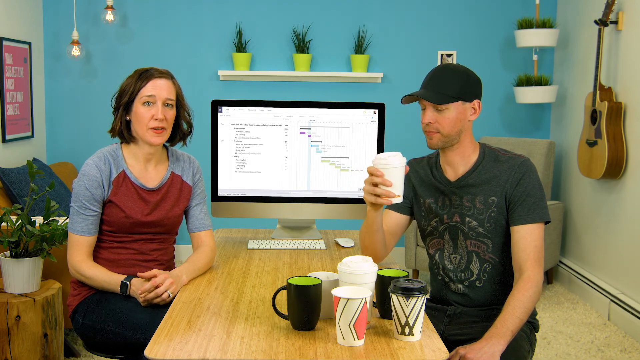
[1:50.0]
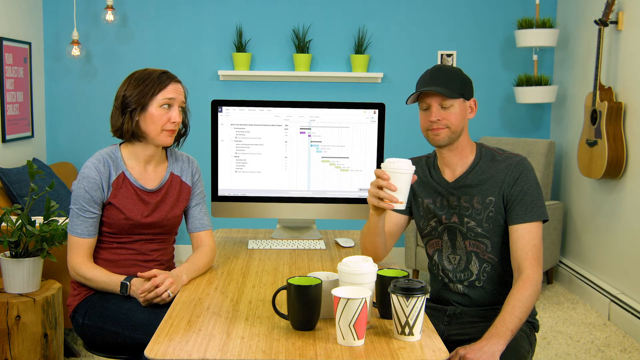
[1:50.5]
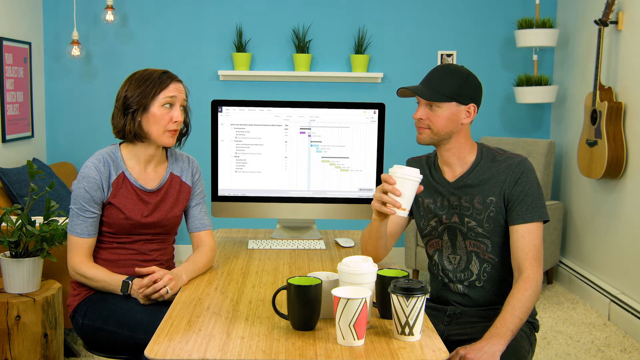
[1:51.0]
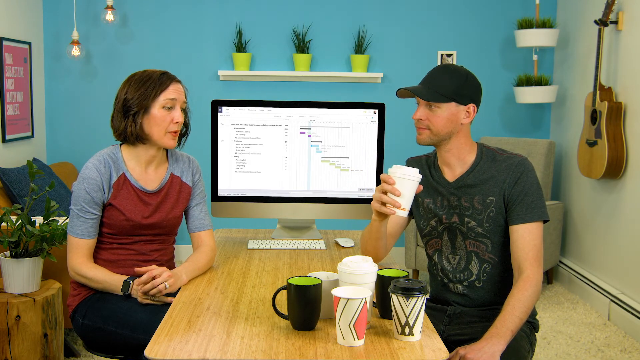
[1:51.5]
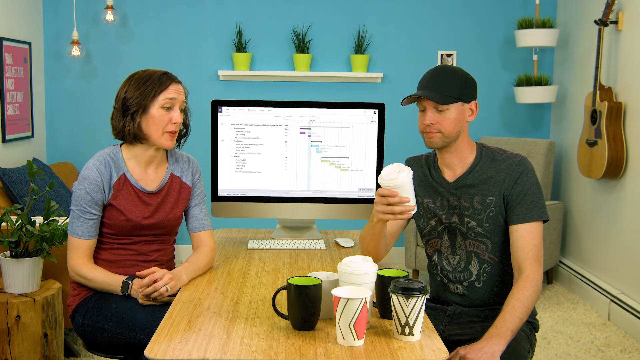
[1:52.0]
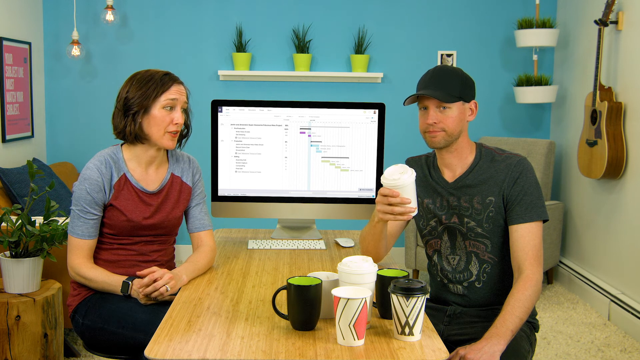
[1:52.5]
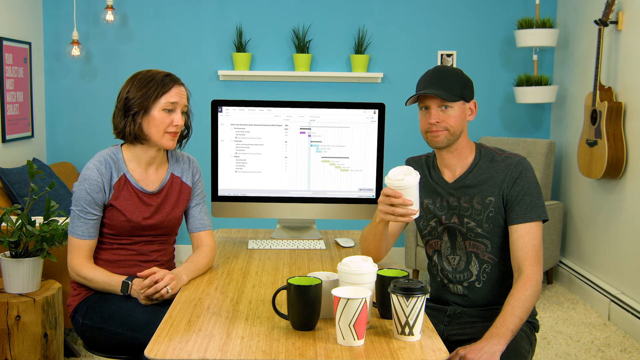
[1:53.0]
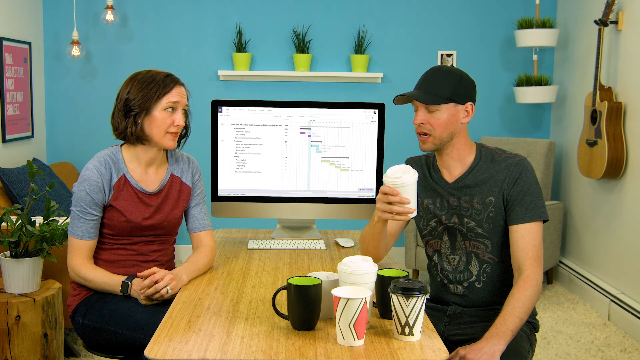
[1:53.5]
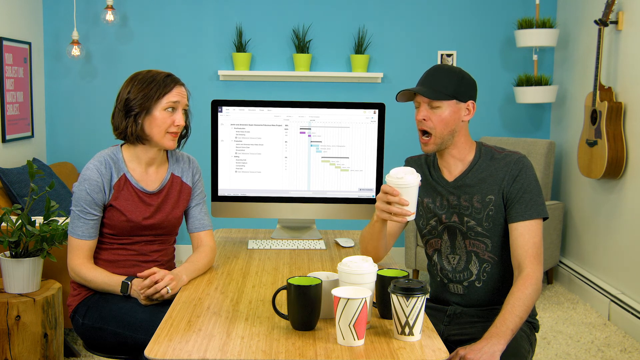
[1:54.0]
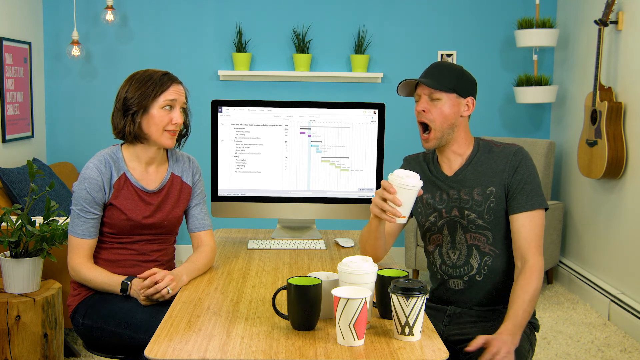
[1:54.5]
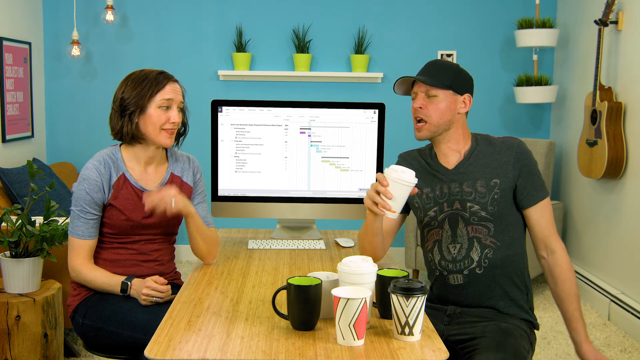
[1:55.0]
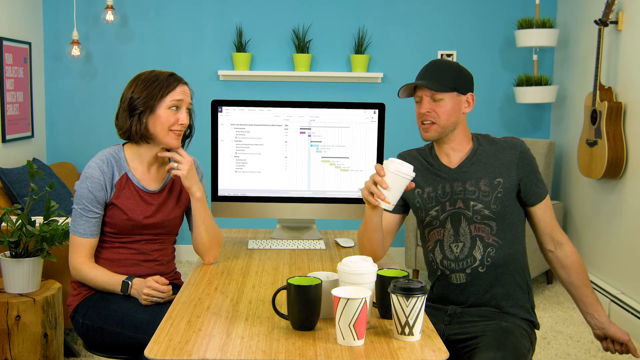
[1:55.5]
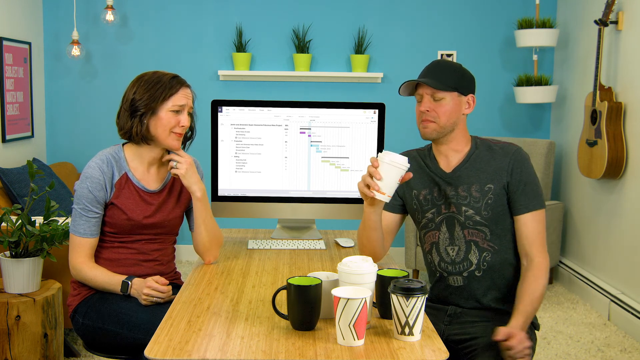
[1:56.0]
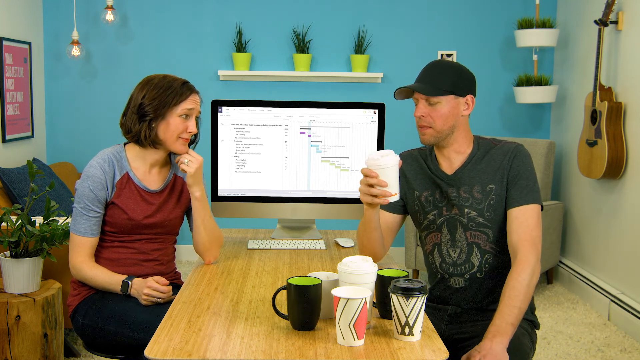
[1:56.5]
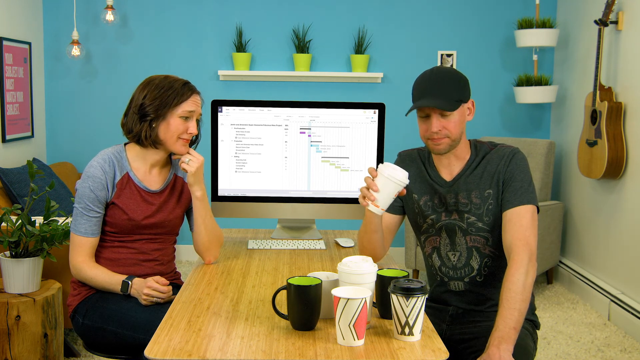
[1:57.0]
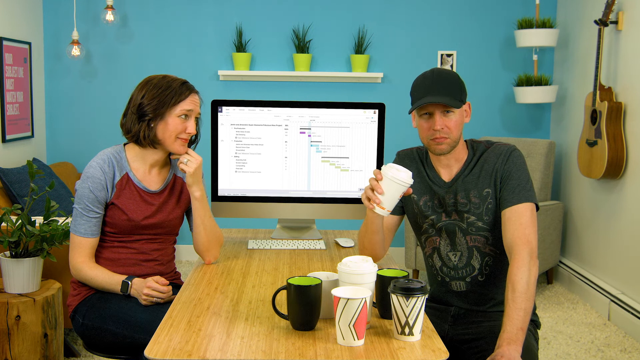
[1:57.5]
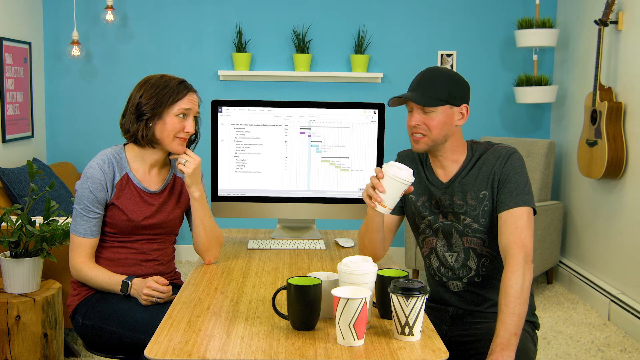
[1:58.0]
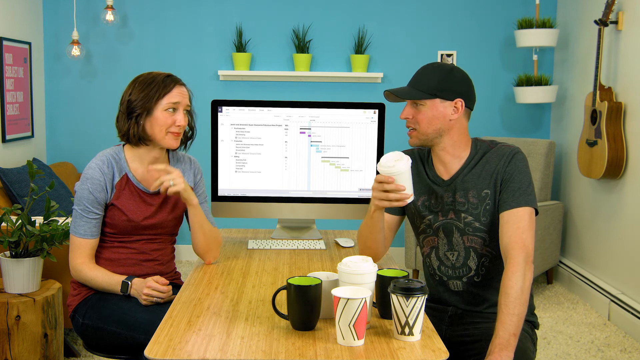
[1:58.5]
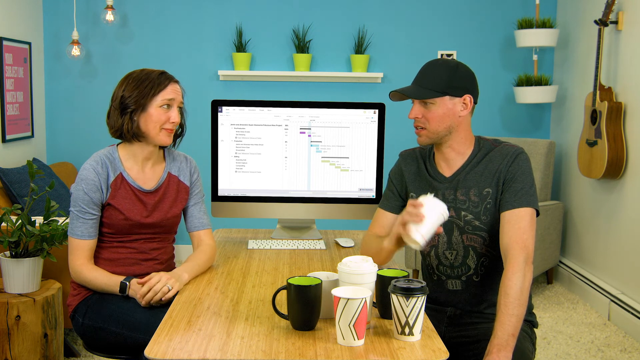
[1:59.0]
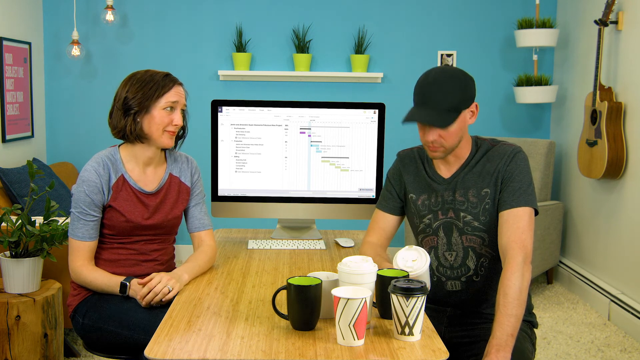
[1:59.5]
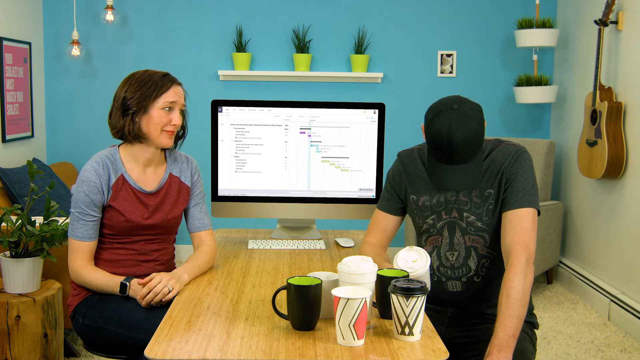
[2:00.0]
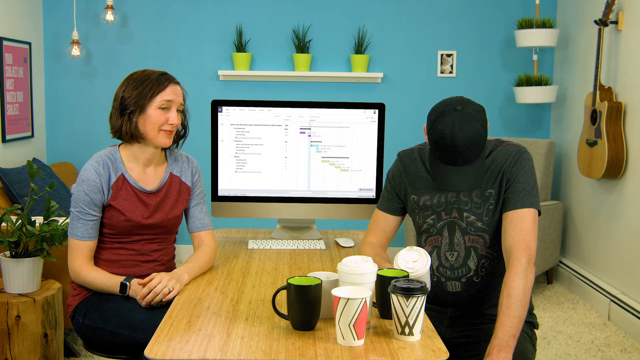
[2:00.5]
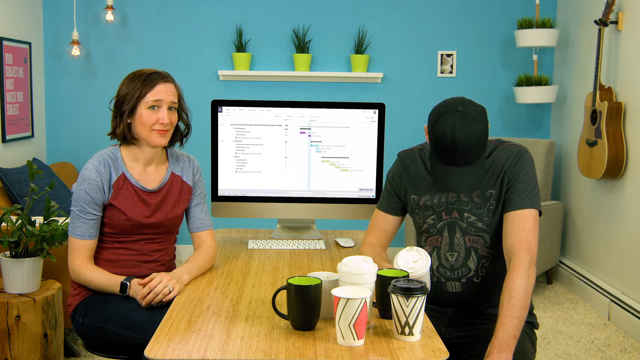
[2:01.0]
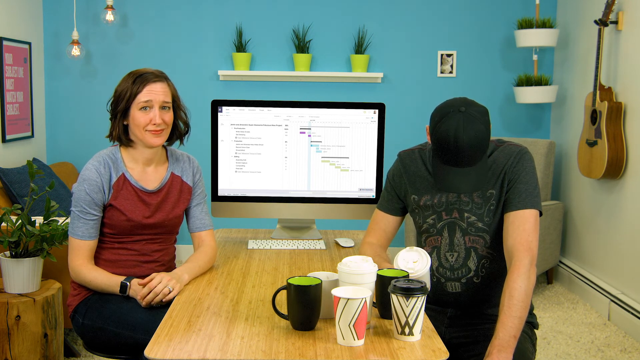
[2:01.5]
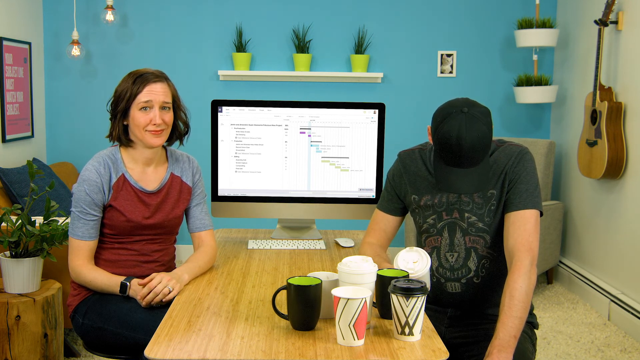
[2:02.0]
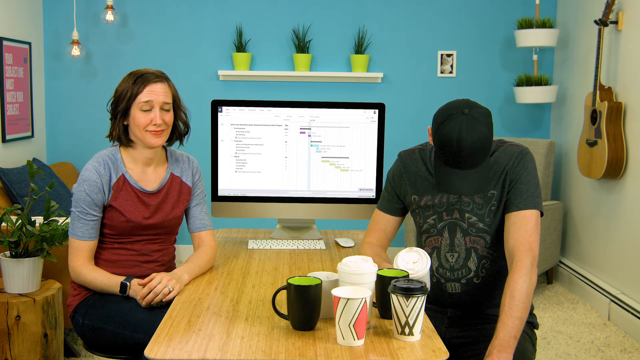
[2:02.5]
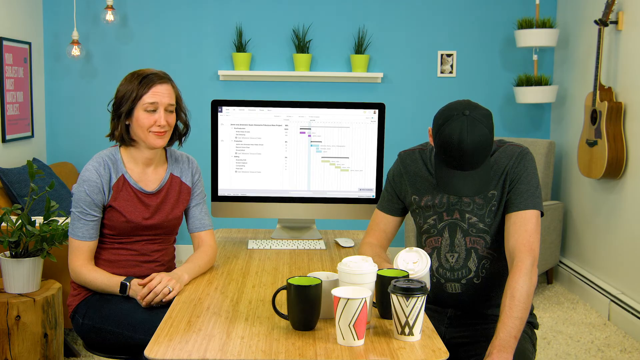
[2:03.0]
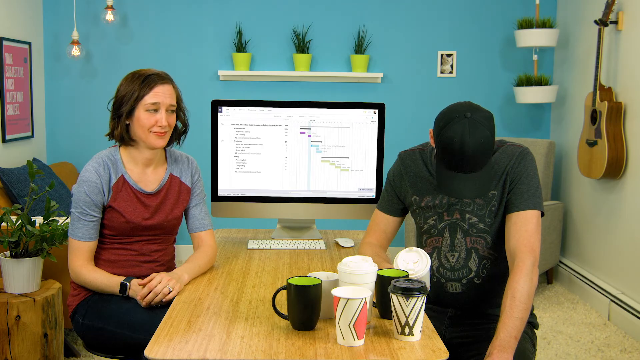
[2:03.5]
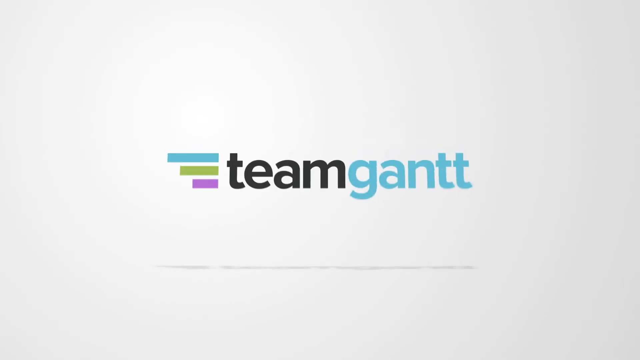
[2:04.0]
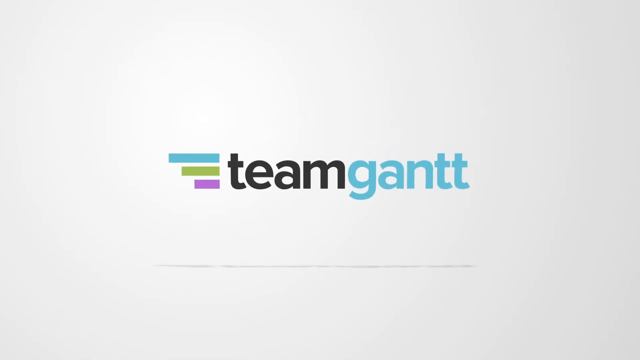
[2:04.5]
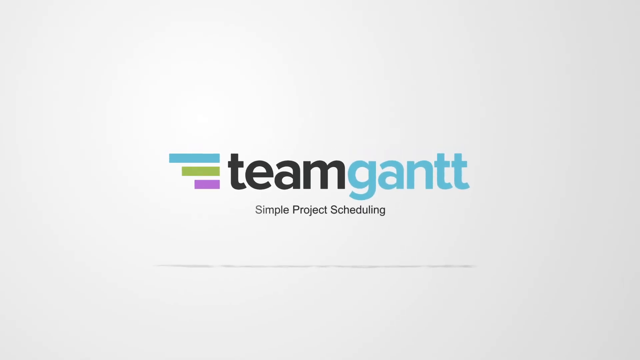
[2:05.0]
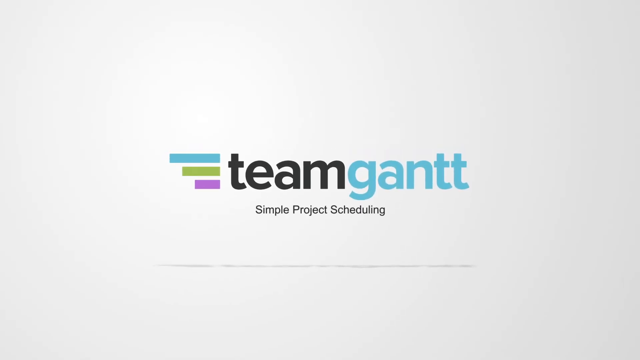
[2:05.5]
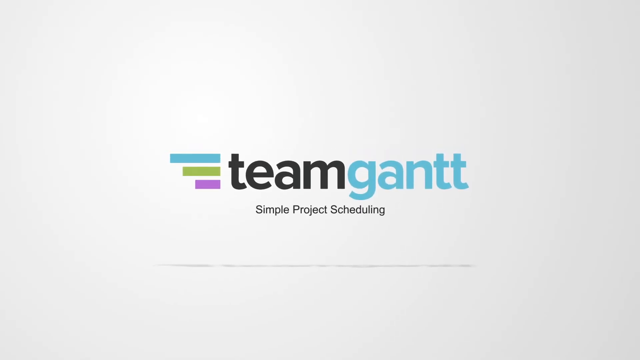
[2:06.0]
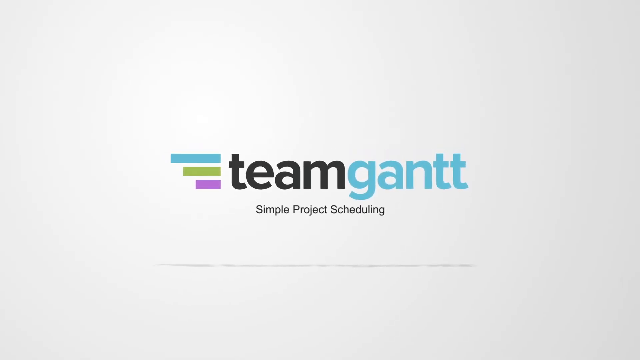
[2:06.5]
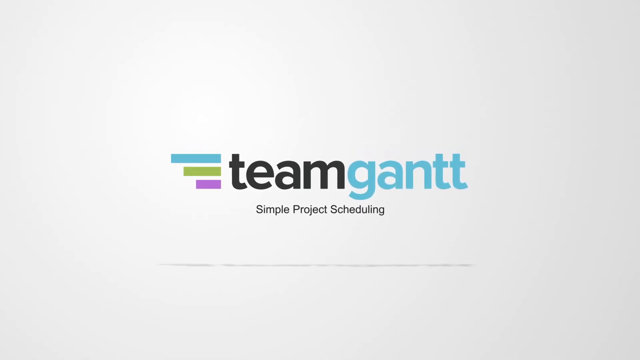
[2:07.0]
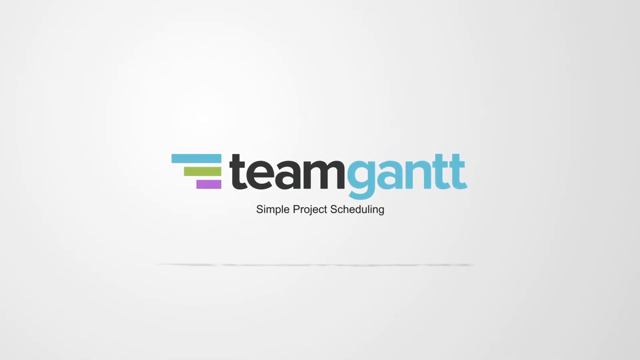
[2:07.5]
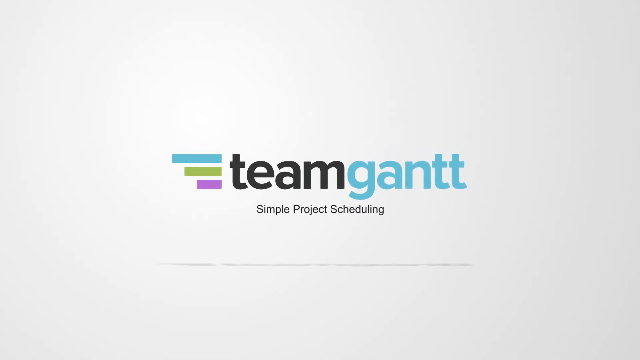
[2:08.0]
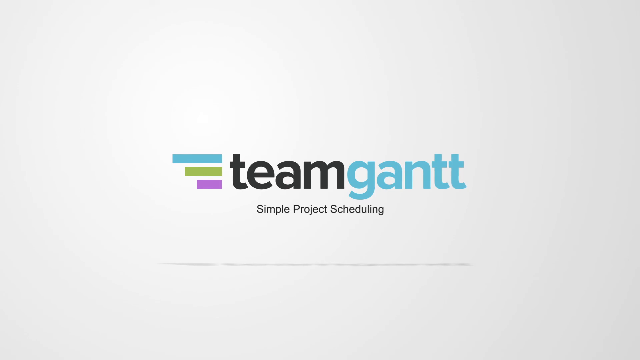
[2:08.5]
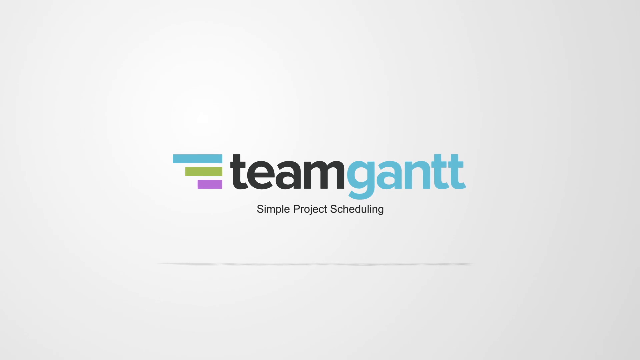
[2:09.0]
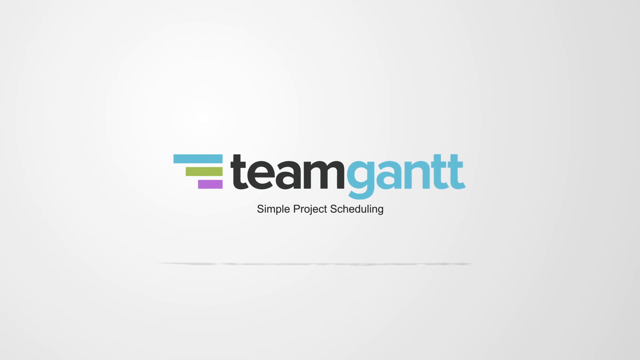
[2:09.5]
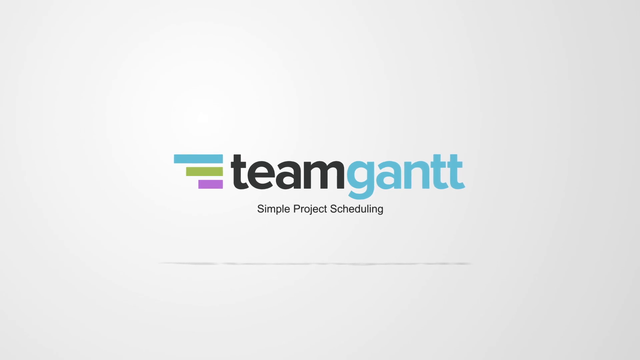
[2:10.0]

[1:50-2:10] A man in a black hat drinks from a white styrofoam cup. A bunch of other cups are on a brown table, which also holds a computer screen with some text on it, a mouse and a keyboard. A woman on the left side in a gray and red shirt looks at the camera and talks, then looks at the man; he looks at her, then at his cup, then at the camera, and back at her. He starts to yawn and continues talking, looking at the camera, at her, and then down. She turns her head, looks at the camera and shakes her head. The video then goes to a white background with black and blue text reading "Team Gantt," along with a blue rectangular box, a green rectangular box and a purple rectangular box, and black text reading "Simple Project Scheduling."